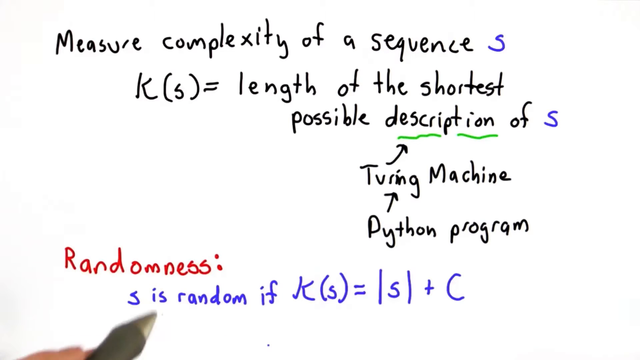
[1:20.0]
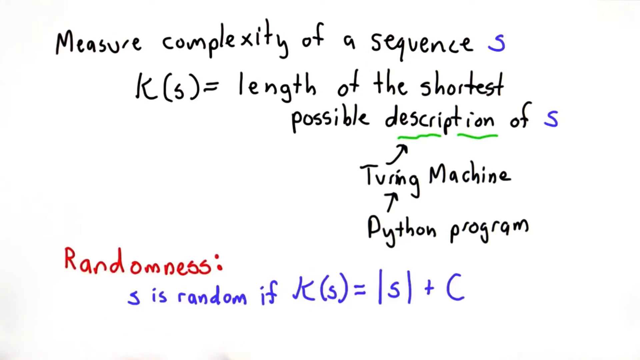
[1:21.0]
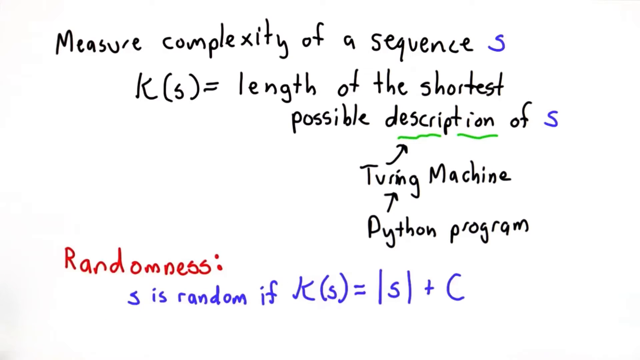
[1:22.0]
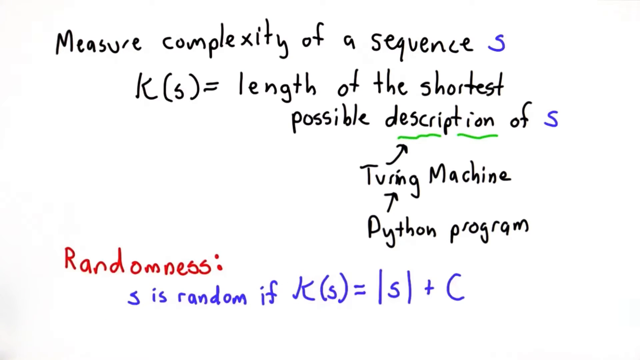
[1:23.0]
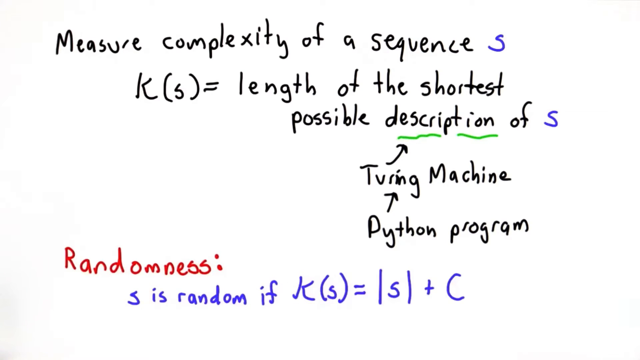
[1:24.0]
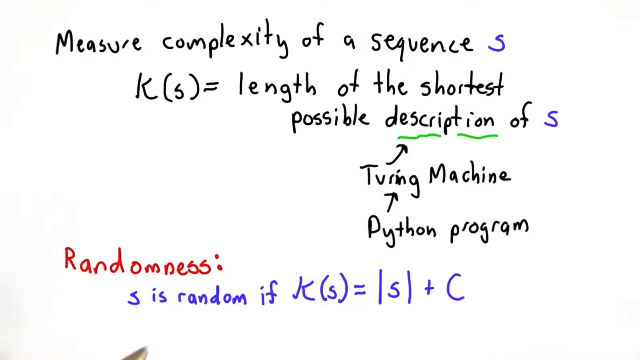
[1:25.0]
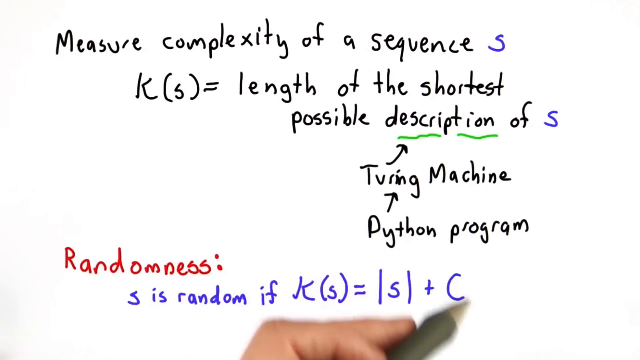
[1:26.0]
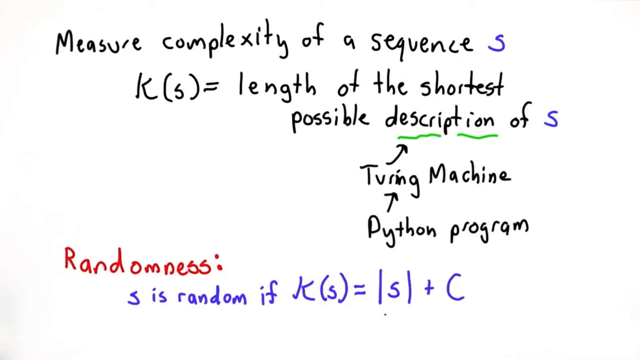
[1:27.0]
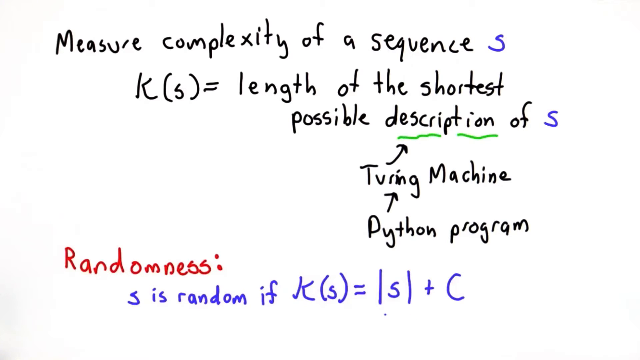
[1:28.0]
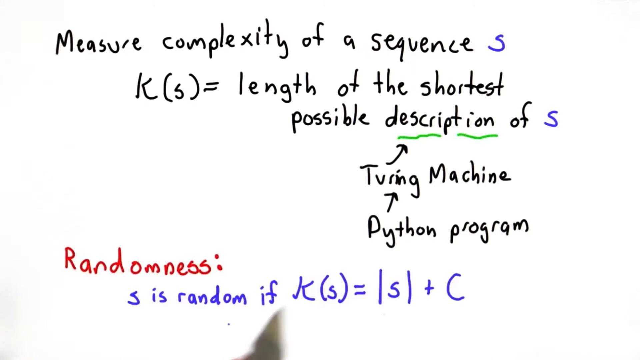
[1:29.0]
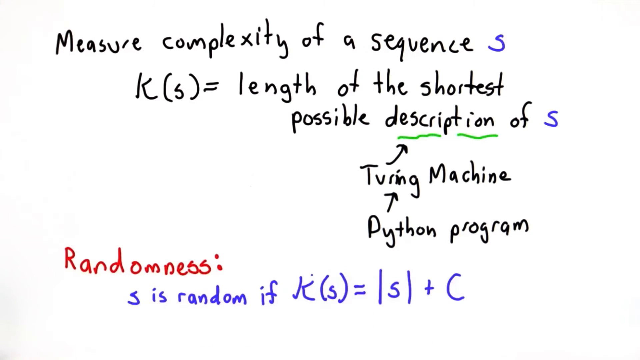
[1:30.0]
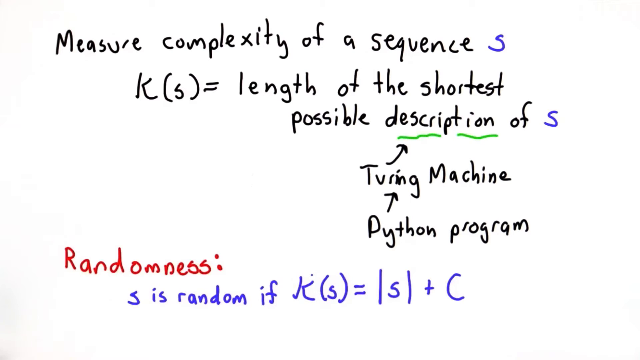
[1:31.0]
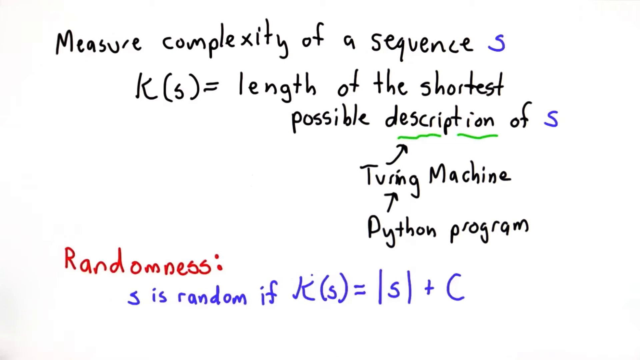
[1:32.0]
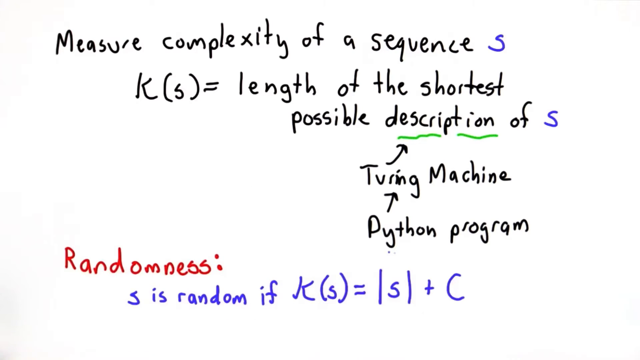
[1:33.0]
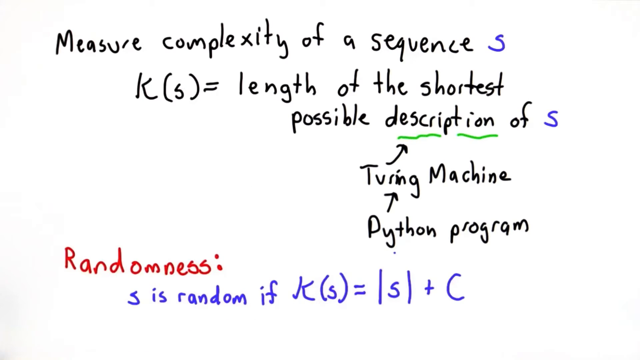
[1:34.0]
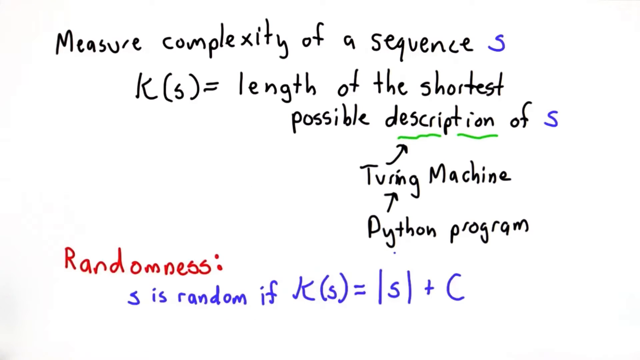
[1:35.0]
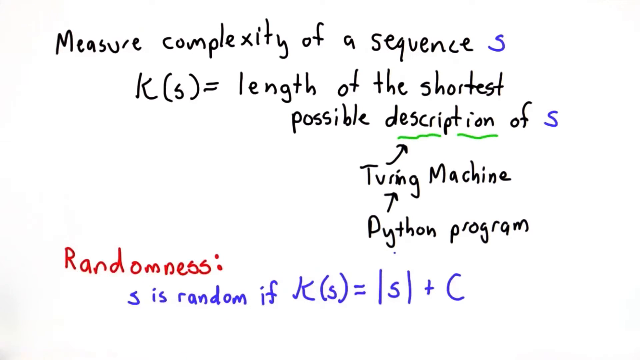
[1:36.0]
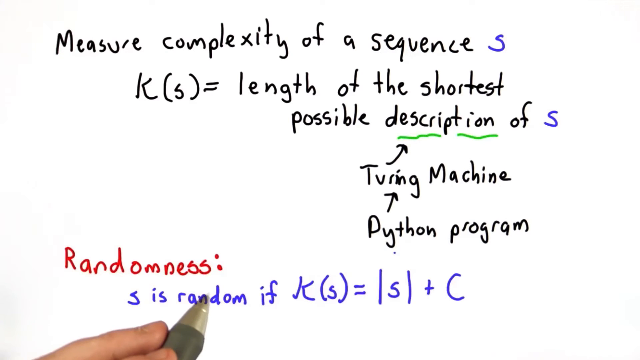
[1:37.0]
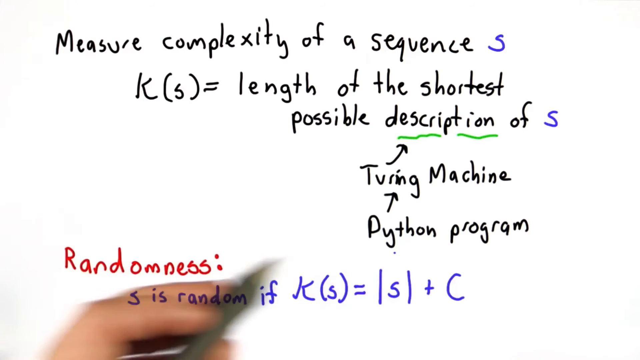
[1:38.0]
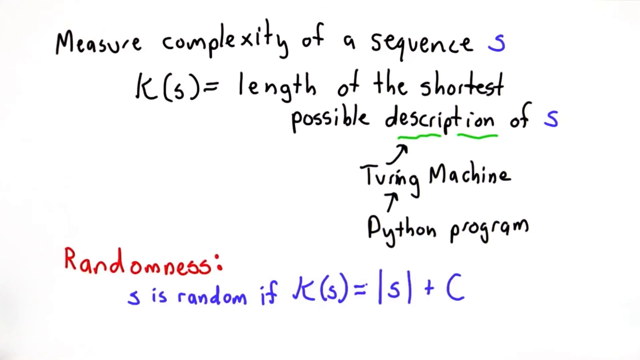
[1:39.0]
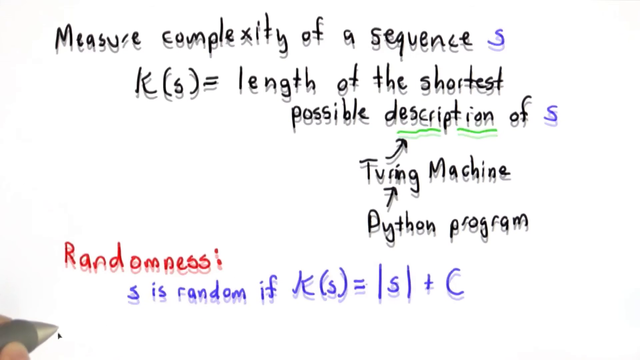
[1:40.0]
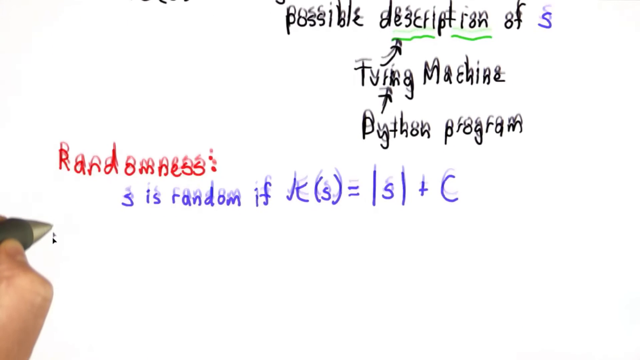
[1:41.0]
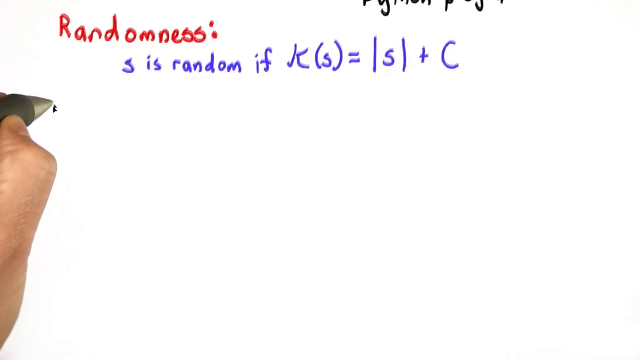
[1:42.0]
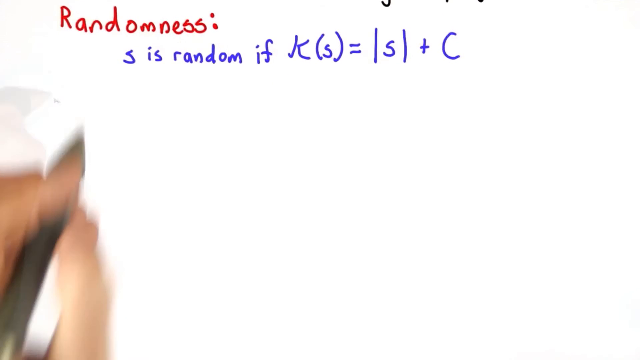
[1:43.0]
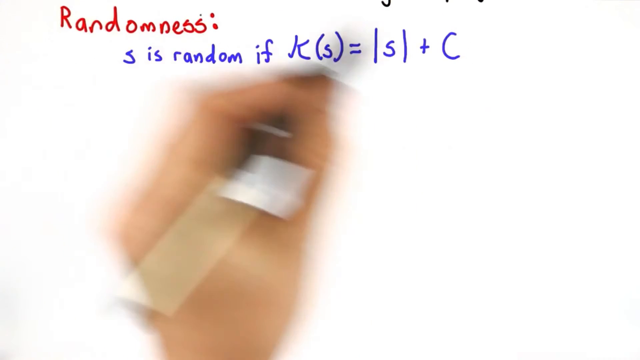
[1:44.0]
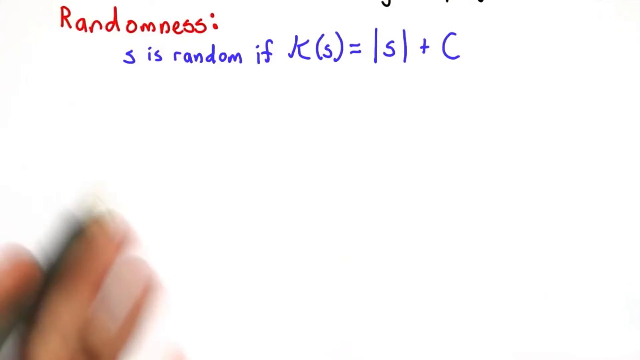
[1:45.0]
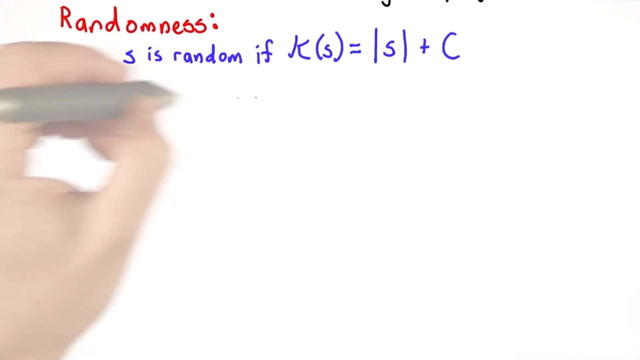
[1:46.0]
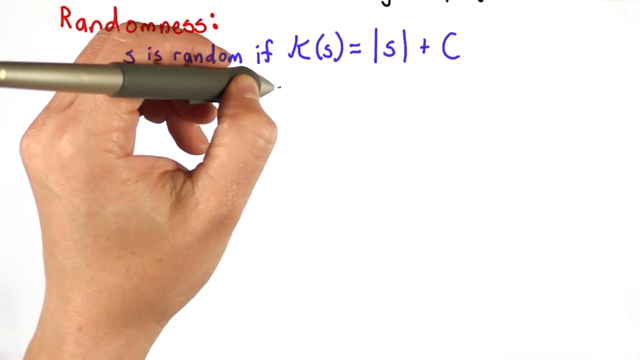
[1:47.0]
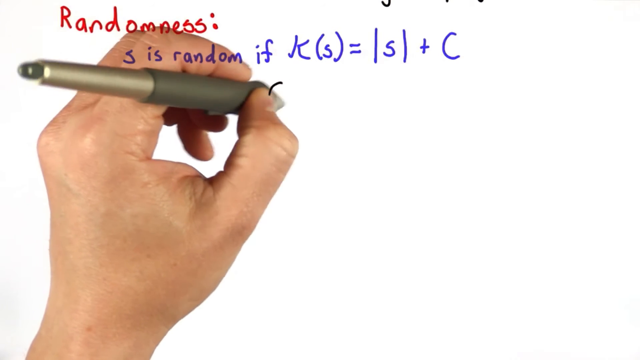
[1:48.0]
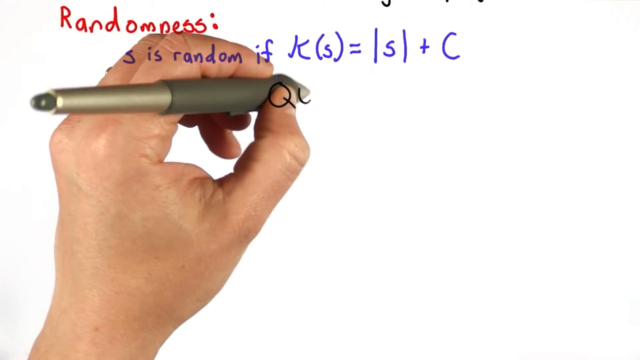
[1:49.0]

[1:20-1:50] The white screen shows, in black from the top, "measure complexity of a sequence s," then K(s) equals "length of the shortest possible description of s." Underneath in black is "Turing machine," with an arrow going from "Turing" up to "description," and under it "Python program," with an arrow going from "Python" up to "Turing." In the bottom left-hand corner is the word "randomness" in red, and beneath it in blue is the statement that s is random if K(s) equals s plus C. A left hand holding a gold-colored pen comes into frame and points out parts of the equation, and wherever it points, a dot follows the pen on the screen.